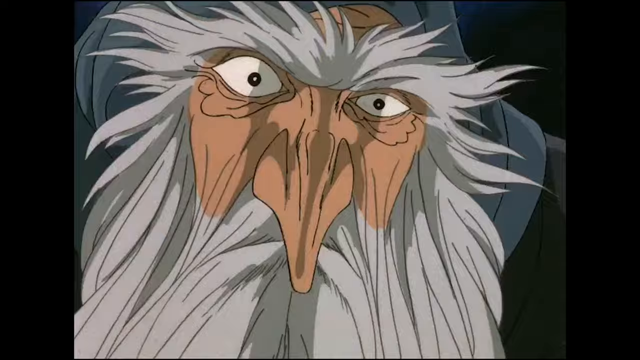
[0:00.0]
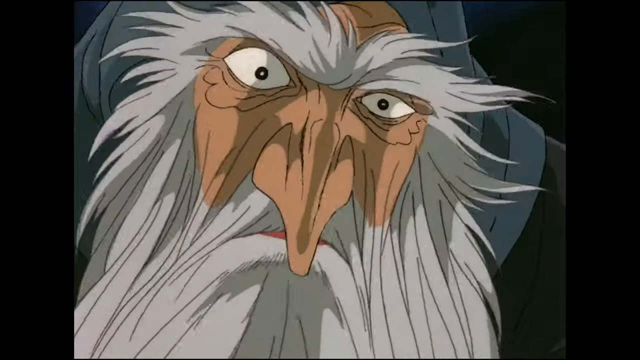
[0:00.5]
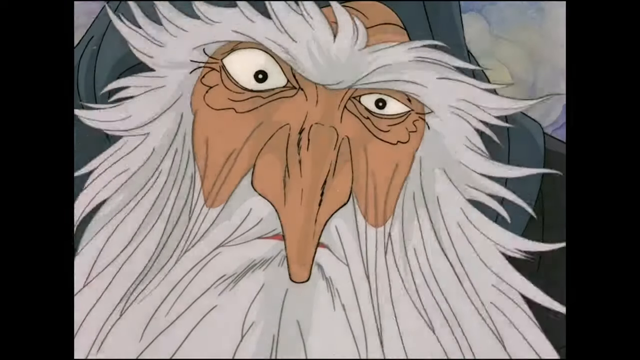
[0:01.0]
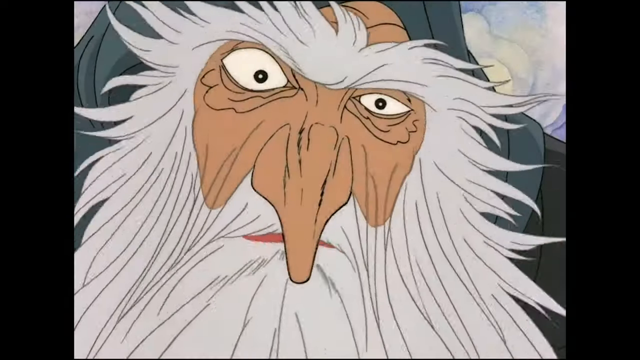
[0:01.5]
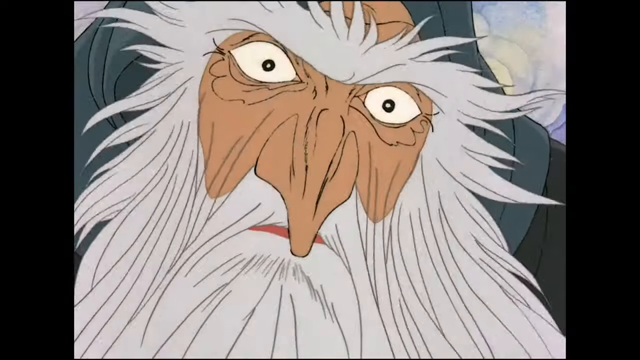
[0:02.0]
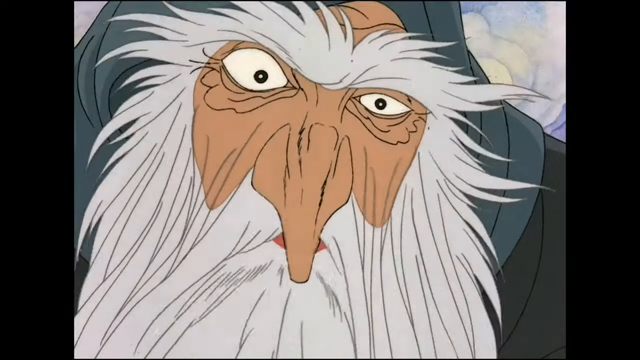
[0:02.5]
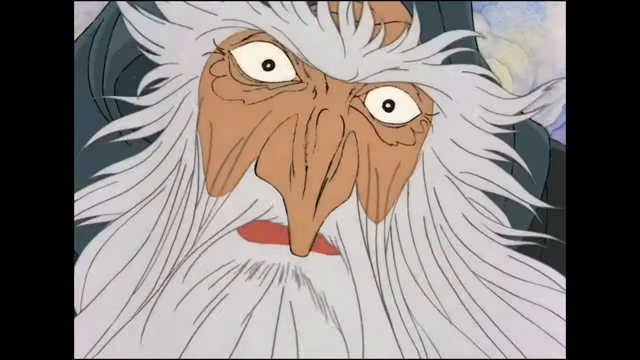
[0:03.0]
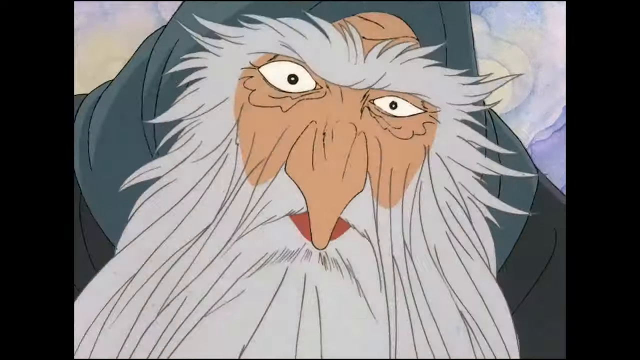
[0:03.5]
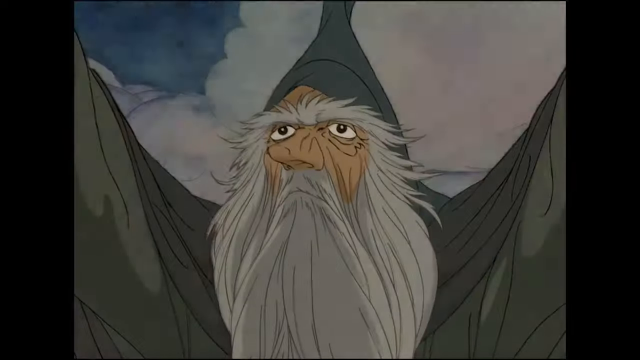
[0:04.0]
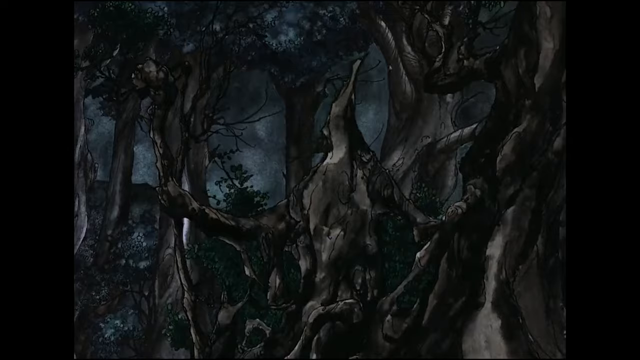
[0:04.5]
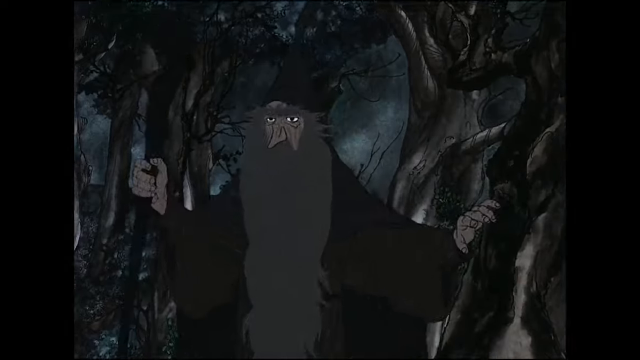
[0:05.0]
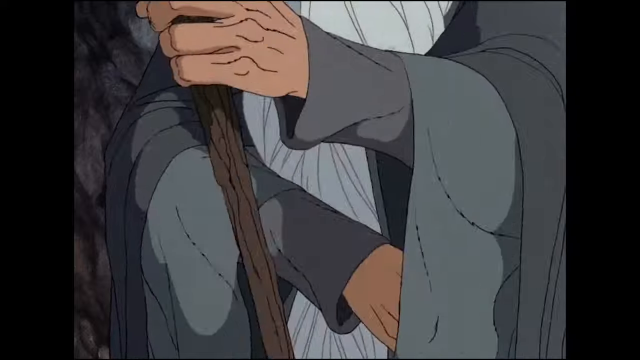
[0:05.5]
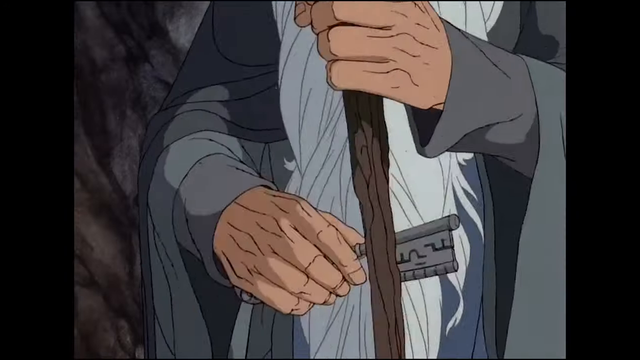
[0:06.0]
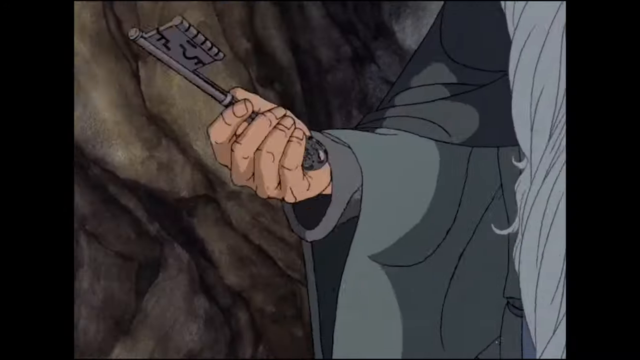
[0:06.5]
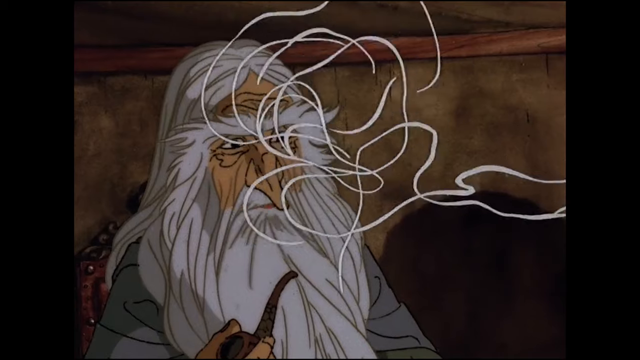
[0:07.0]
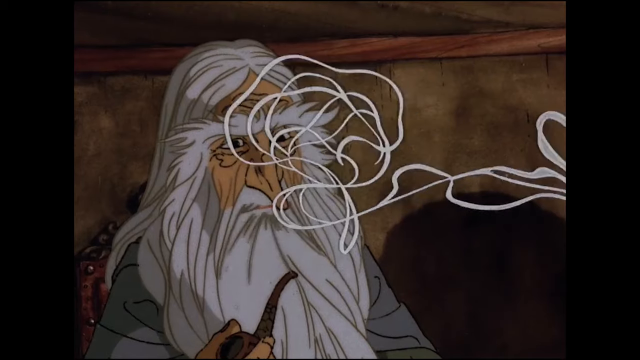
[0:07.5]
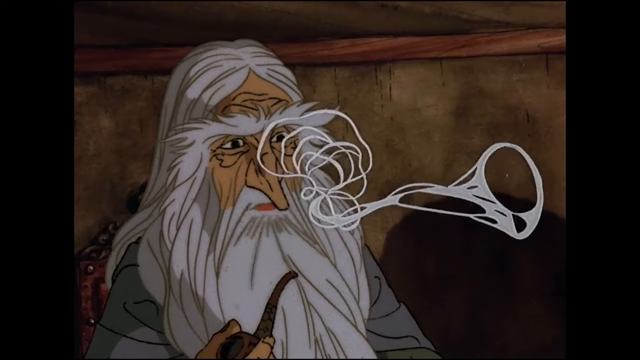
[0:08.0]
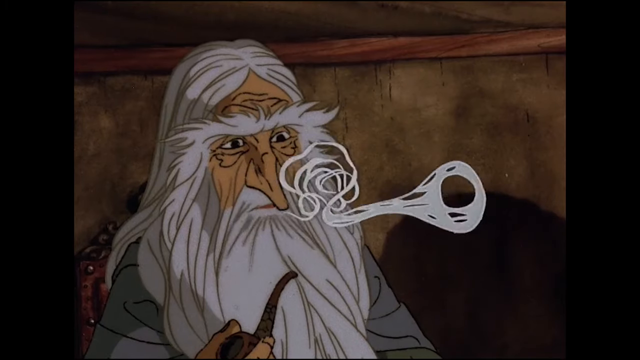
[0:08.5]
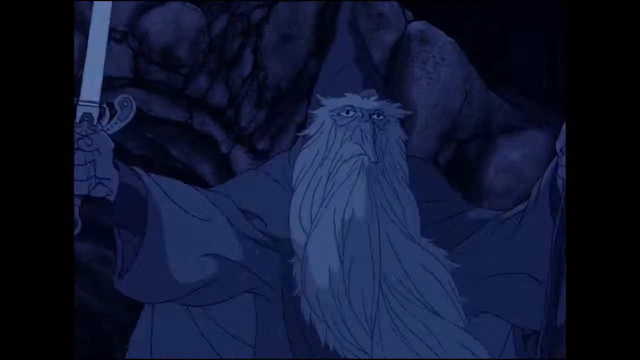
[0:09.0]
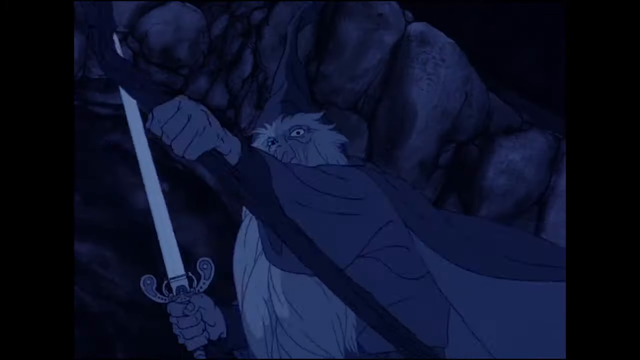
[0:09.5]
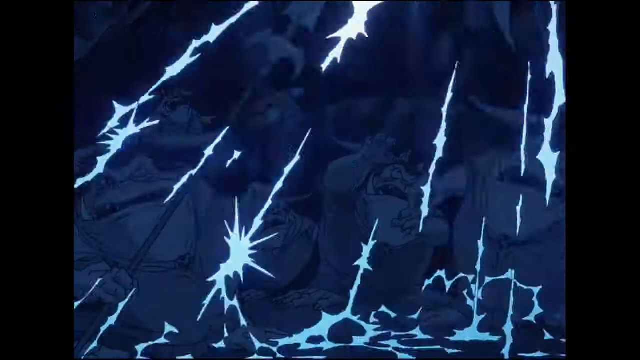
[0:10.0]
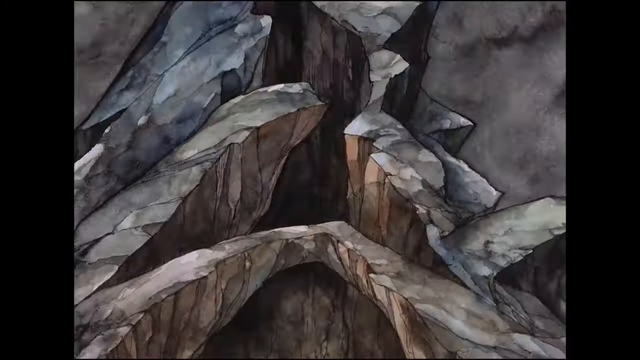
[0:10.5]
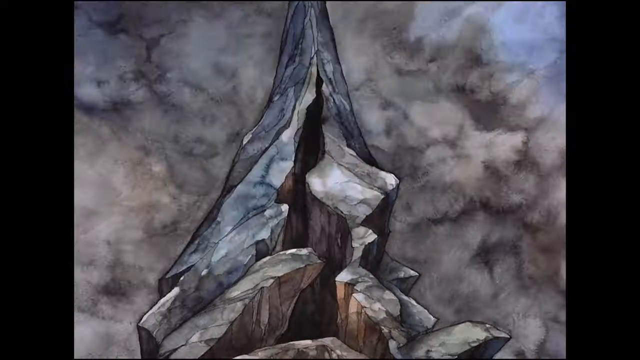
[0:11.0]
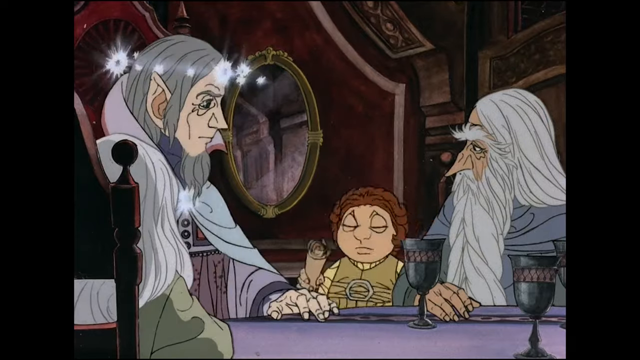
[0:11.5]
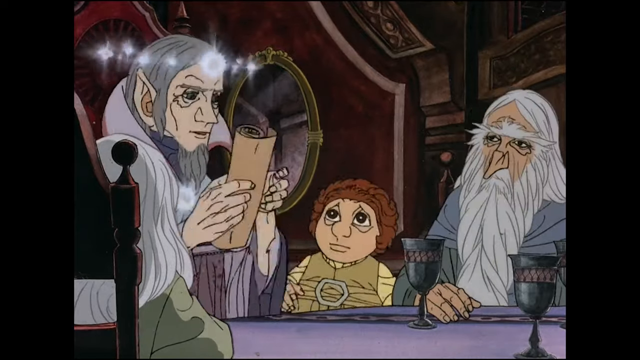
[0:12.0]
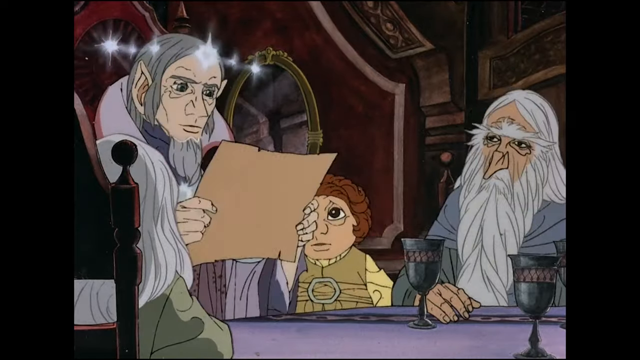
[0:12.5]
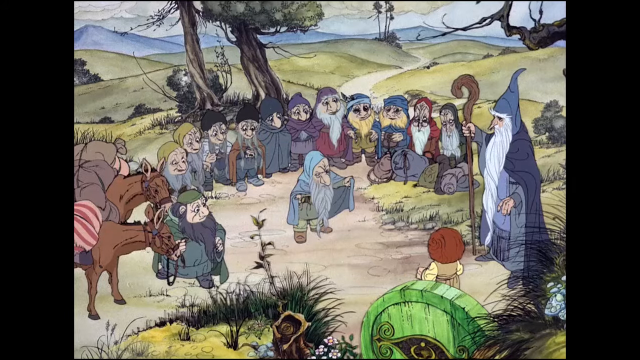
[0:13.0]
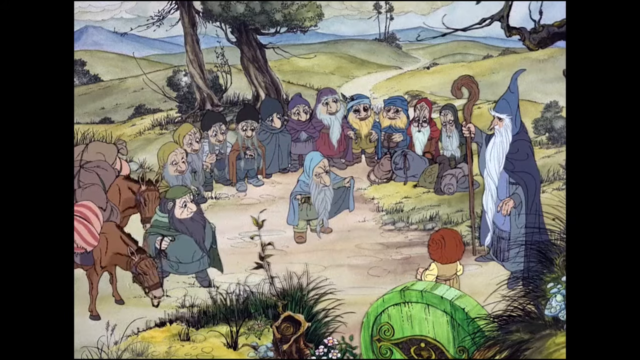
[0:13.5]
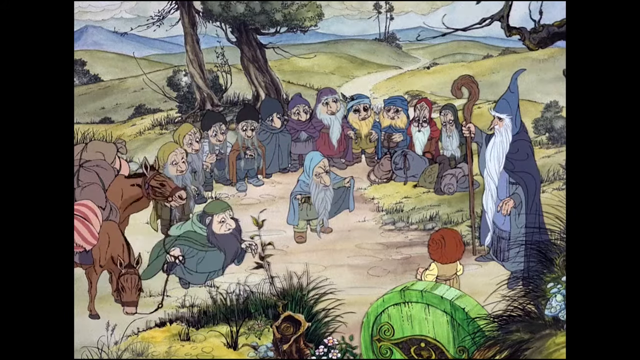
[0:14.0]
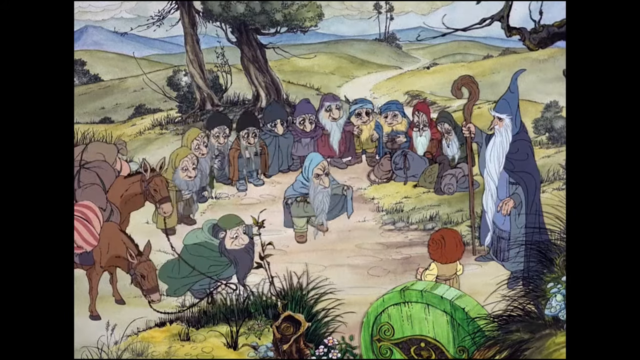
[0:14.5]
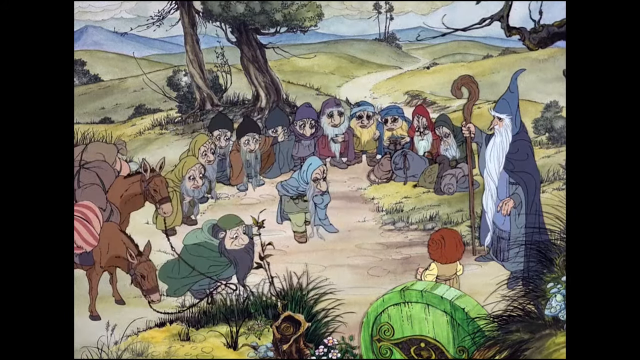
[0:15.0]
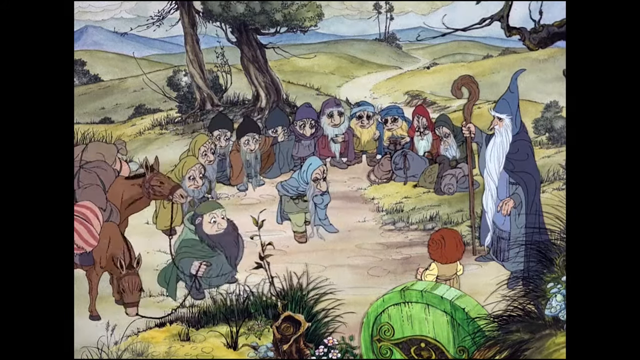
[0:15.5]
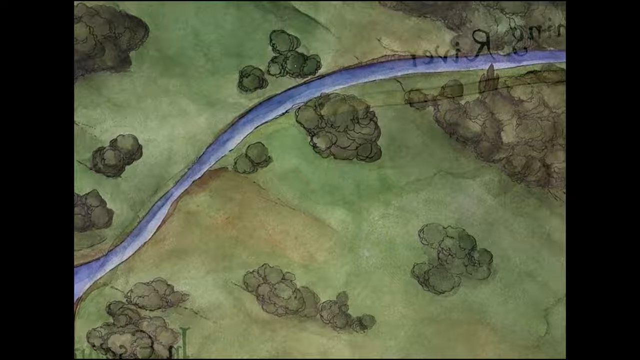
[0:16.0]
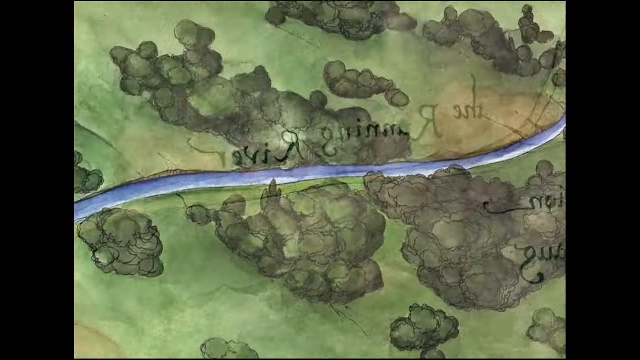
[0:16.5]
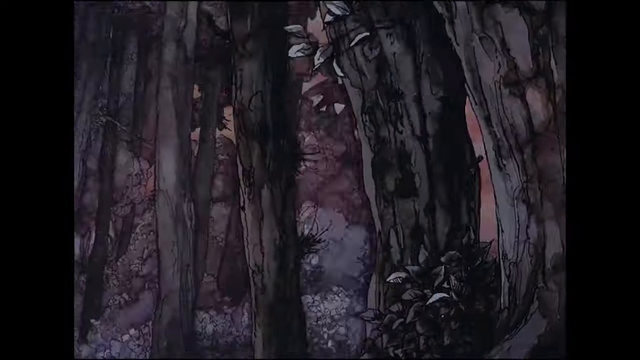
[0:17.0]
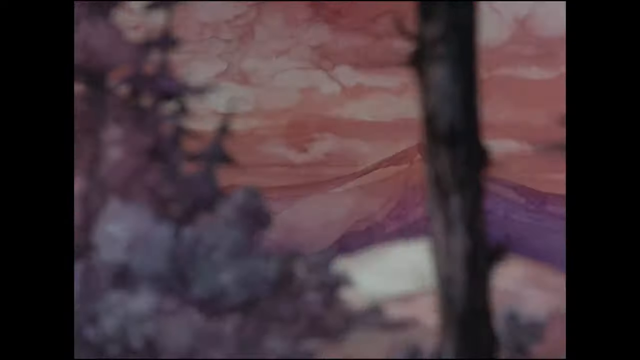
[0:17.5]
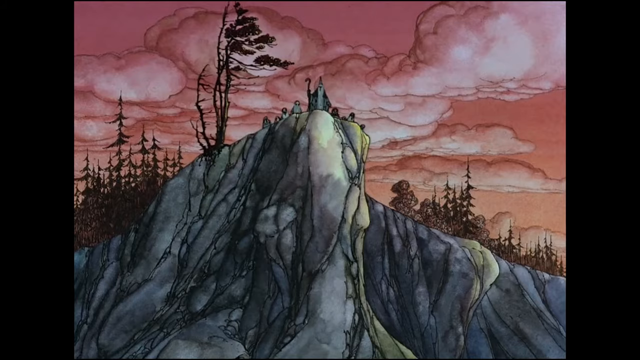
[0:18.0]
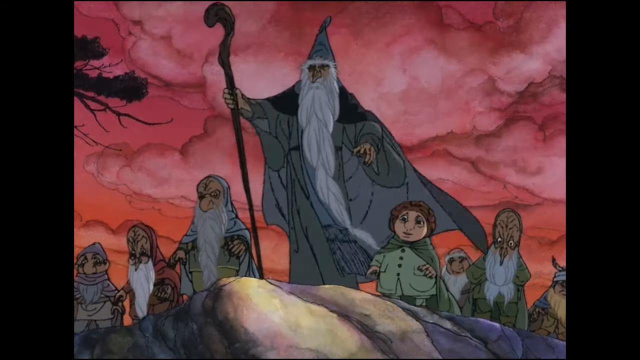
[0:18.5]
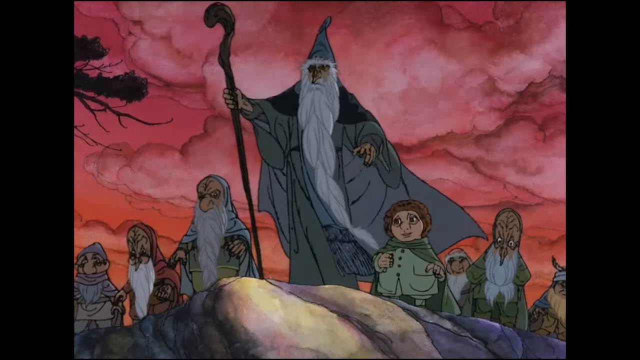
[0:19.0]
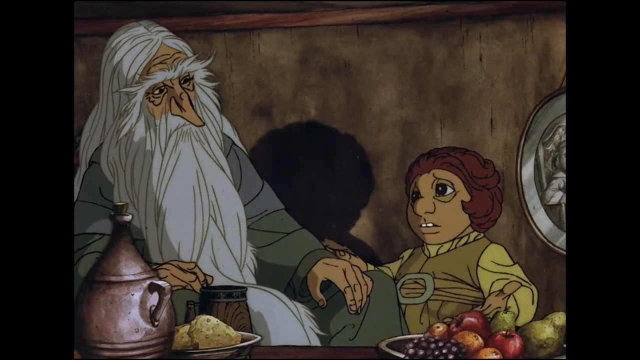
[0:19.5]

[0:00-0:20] An animated old man with a beard stares at the camera. He talks toward the camera, making dramatic facial expressions, then lifts his hands up, raising them above his shoulders. The scene cuts to a man with the same long white beard in a dark, mysterious forest. A close-up follows of the bearded man holding a staff as he takes a key out of his cloak. Next, the man with the white beard holds a pipe while smoke seems to come into his mouth. The wizard is then shown holding a sword and holding up his staff in a dramatic gesture before whipping his cape around as a number of lightning bolts or something similar come toward the ground. Several other short shots follow, including a number of smaller dwarves coming up to the wizard and bowing down to him, a landscape shot showing a river, the man standing on top of a cliff, and more.